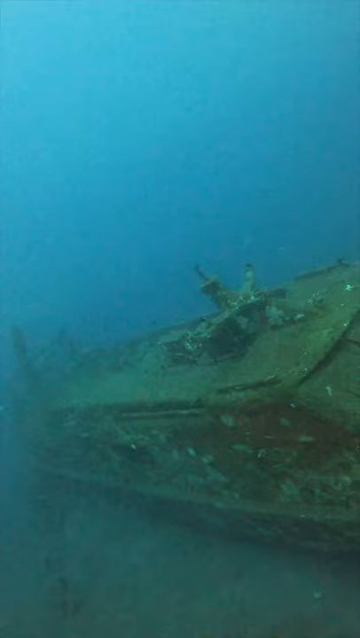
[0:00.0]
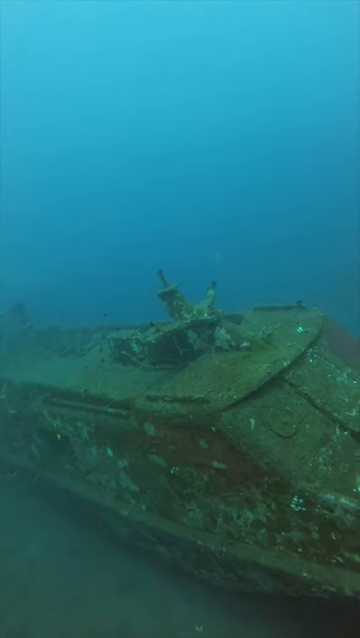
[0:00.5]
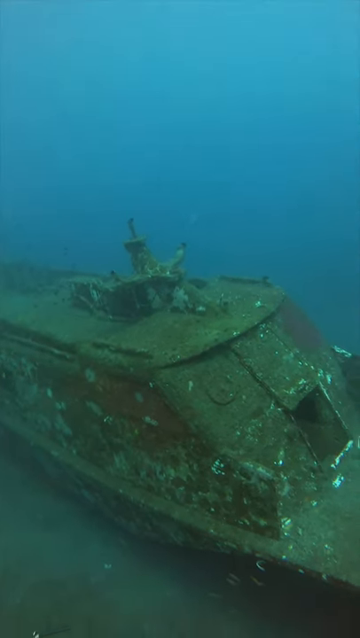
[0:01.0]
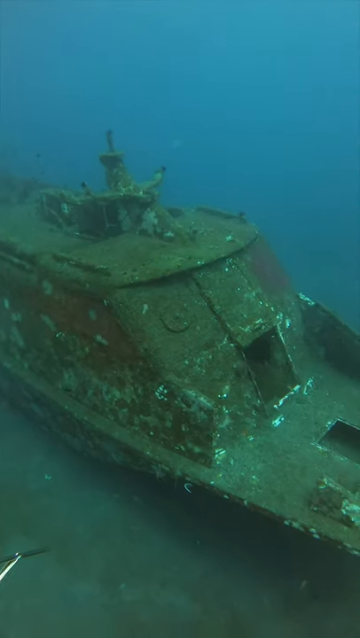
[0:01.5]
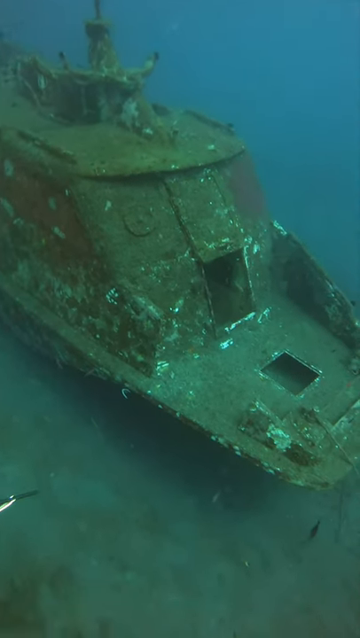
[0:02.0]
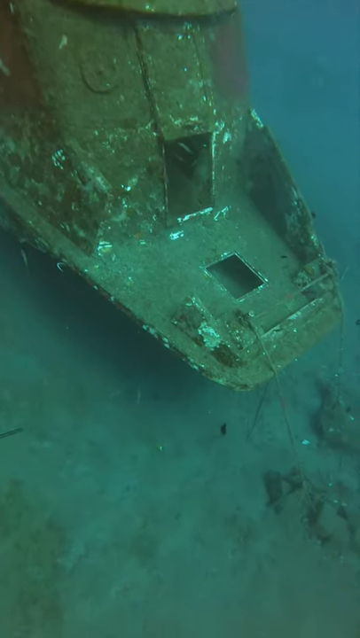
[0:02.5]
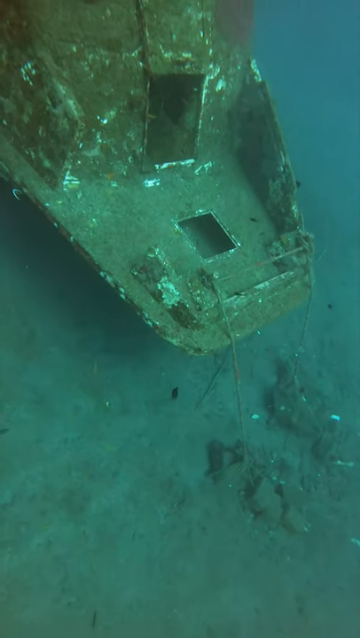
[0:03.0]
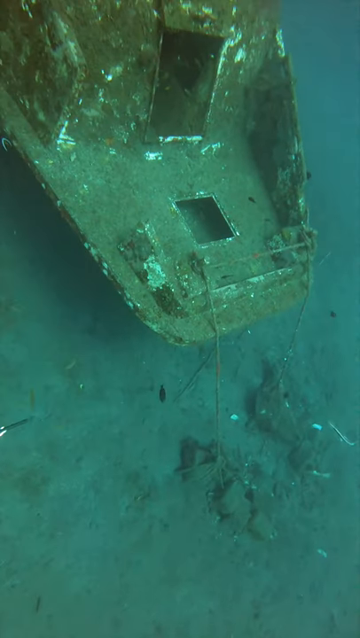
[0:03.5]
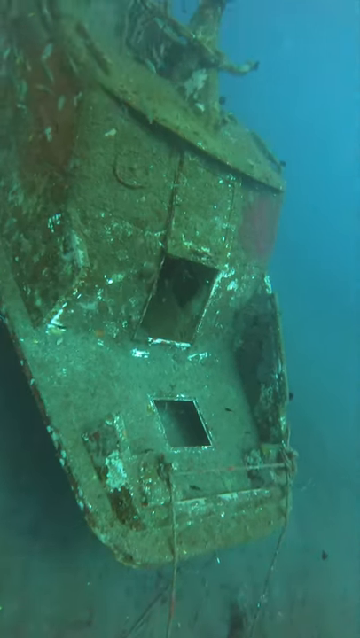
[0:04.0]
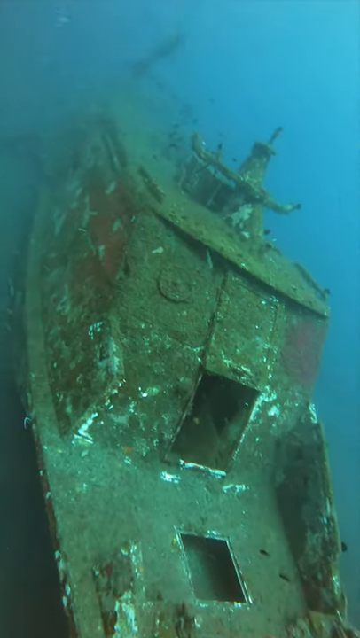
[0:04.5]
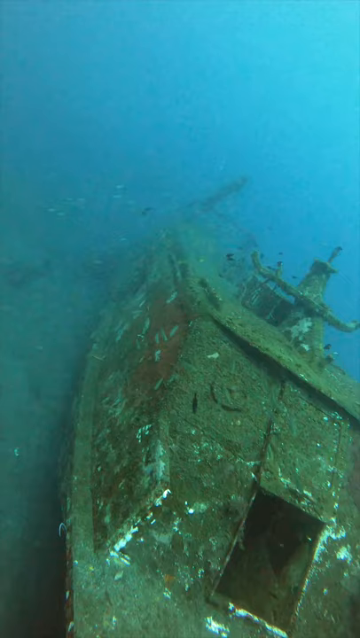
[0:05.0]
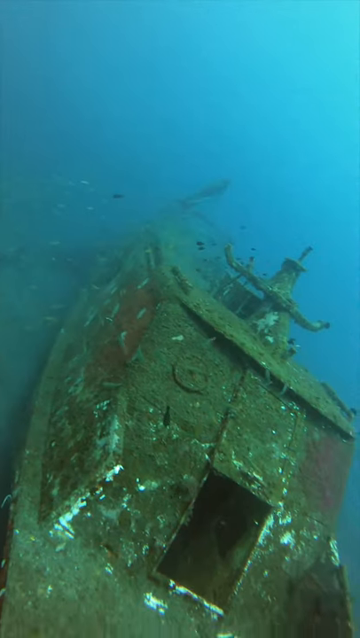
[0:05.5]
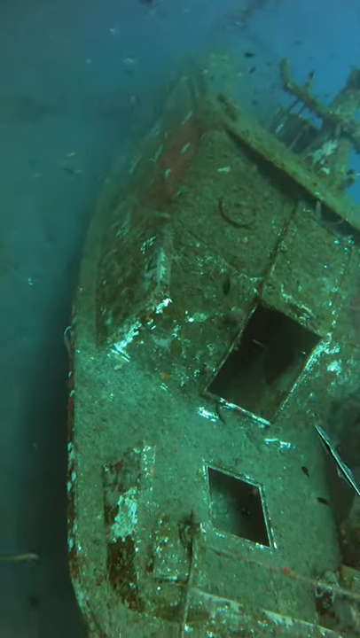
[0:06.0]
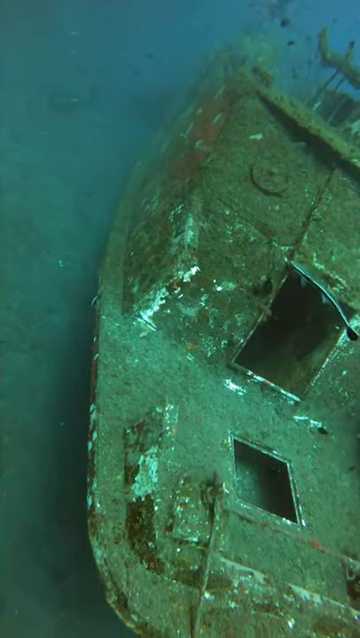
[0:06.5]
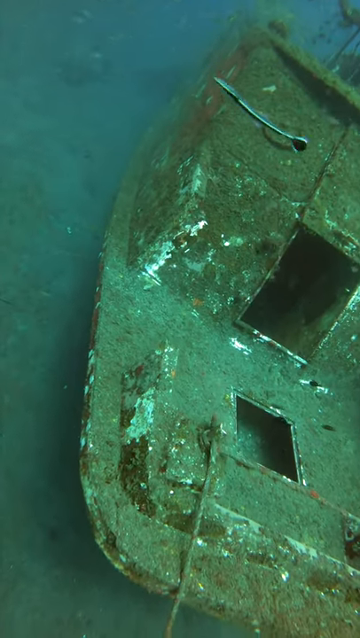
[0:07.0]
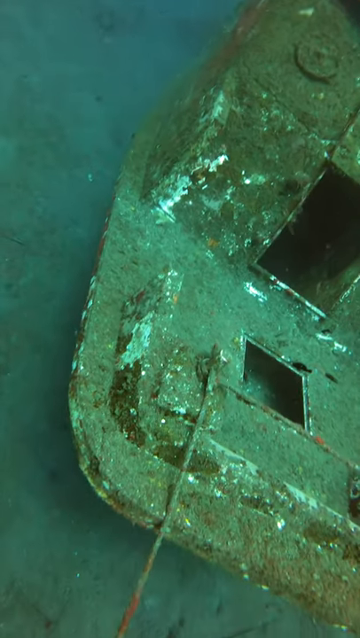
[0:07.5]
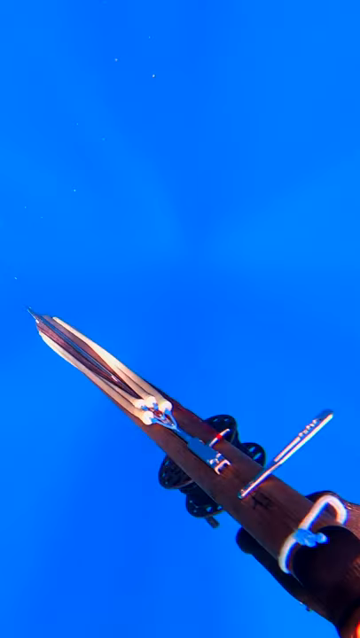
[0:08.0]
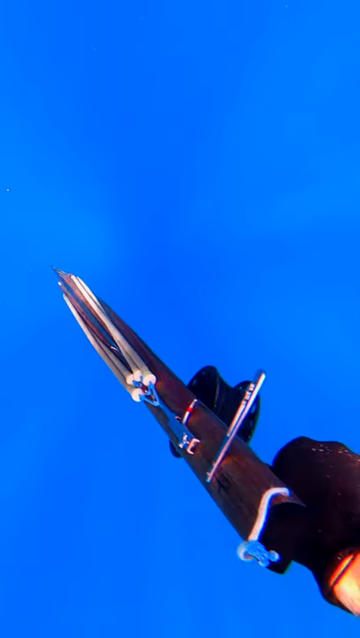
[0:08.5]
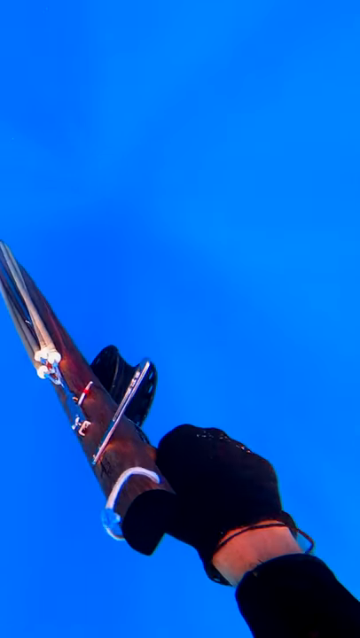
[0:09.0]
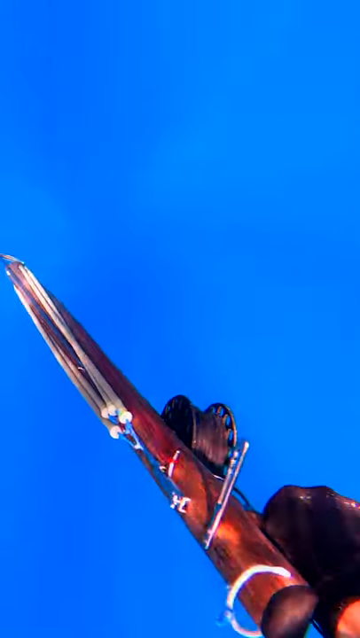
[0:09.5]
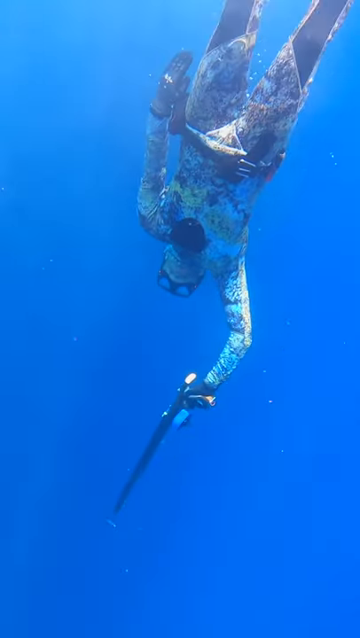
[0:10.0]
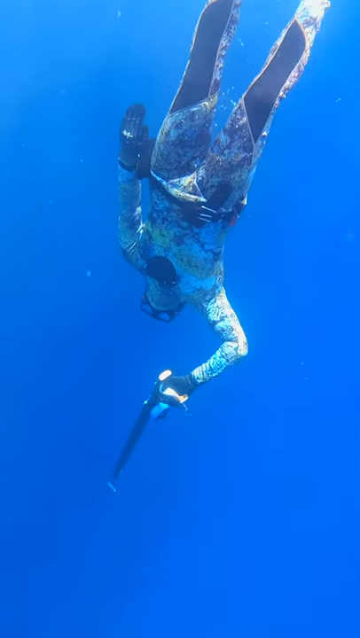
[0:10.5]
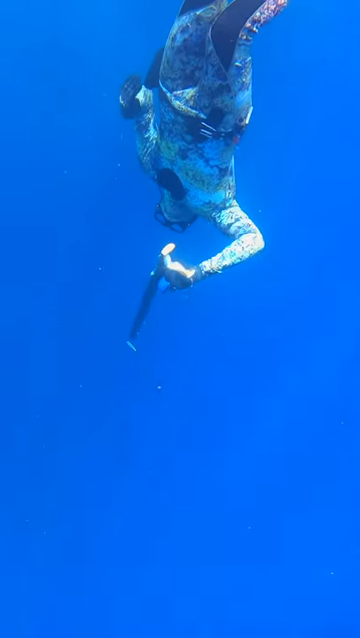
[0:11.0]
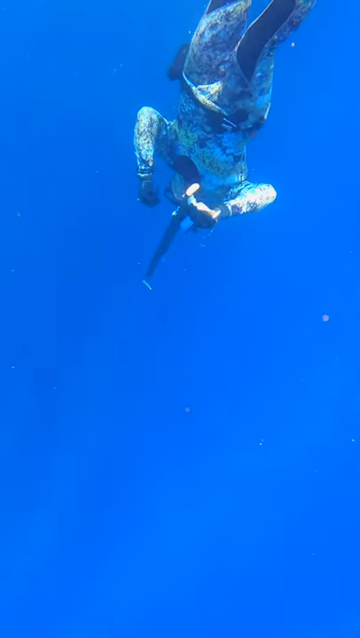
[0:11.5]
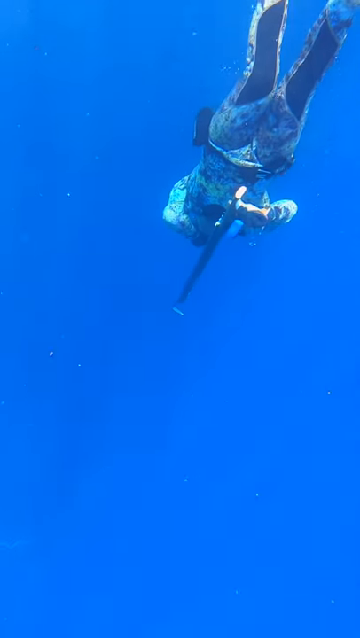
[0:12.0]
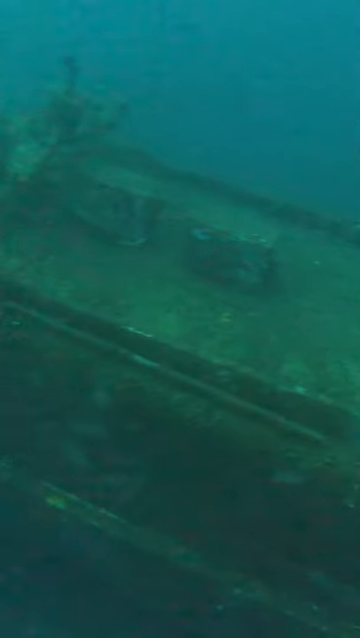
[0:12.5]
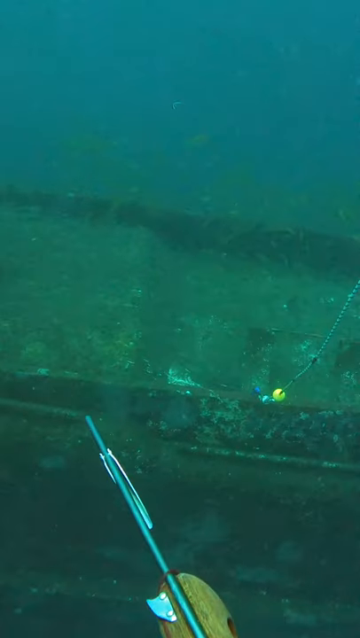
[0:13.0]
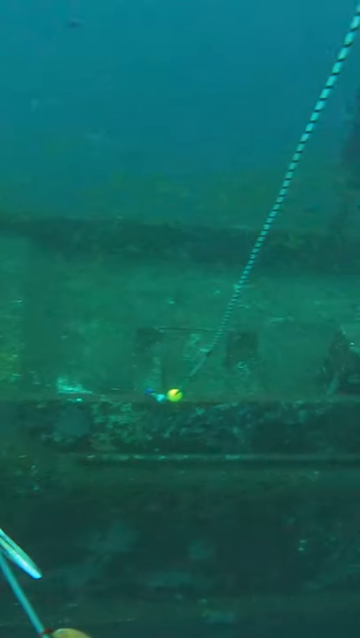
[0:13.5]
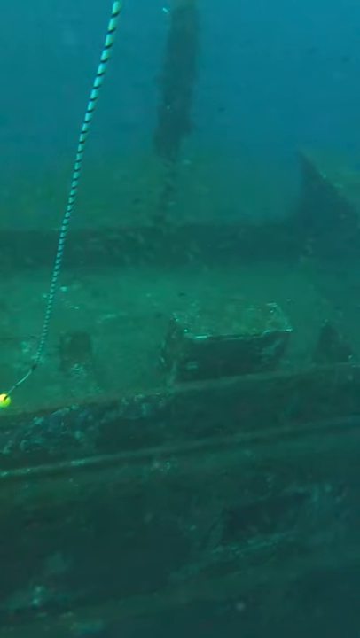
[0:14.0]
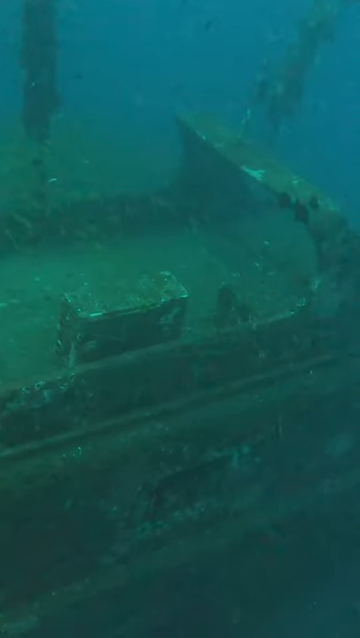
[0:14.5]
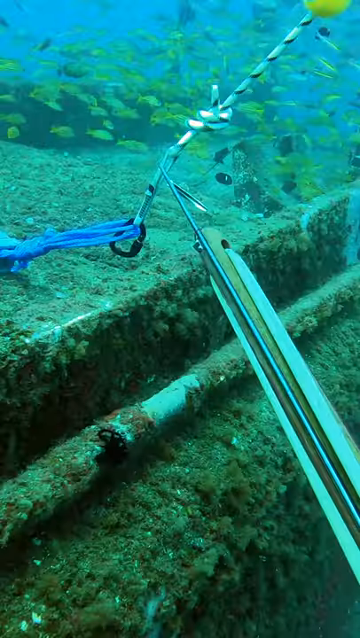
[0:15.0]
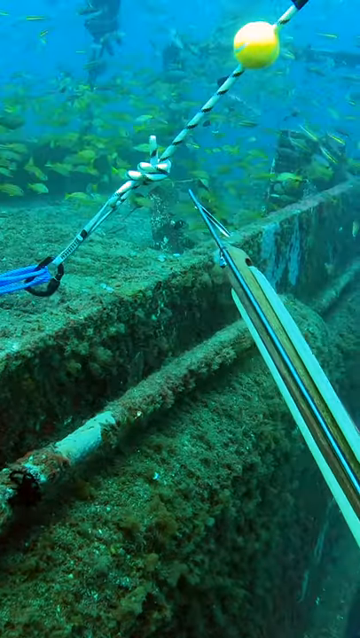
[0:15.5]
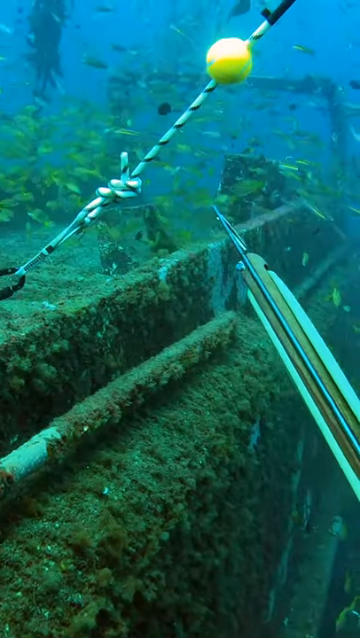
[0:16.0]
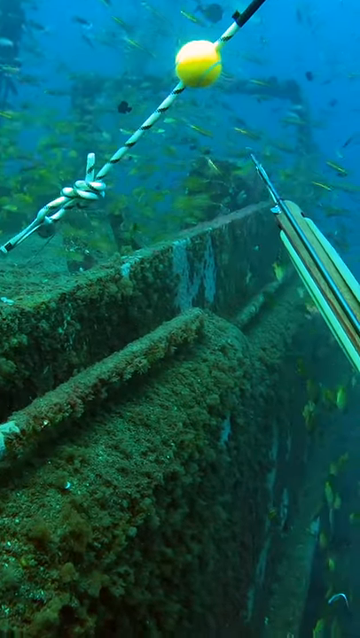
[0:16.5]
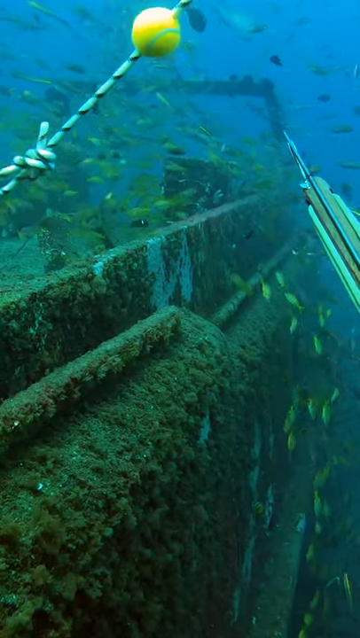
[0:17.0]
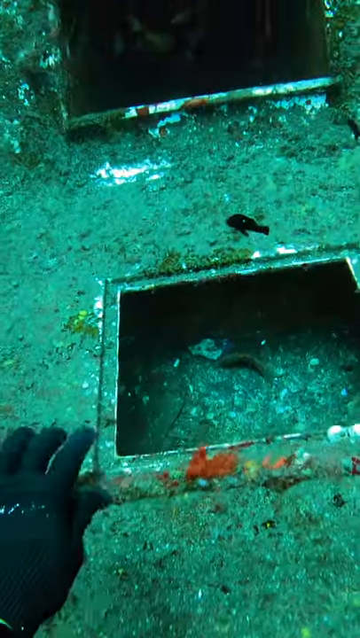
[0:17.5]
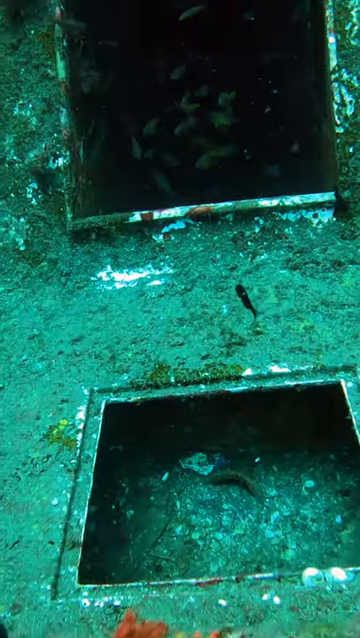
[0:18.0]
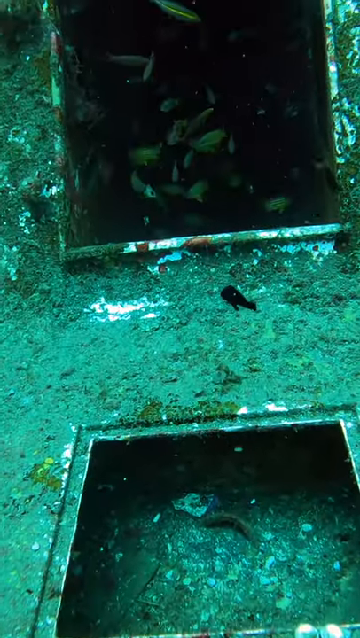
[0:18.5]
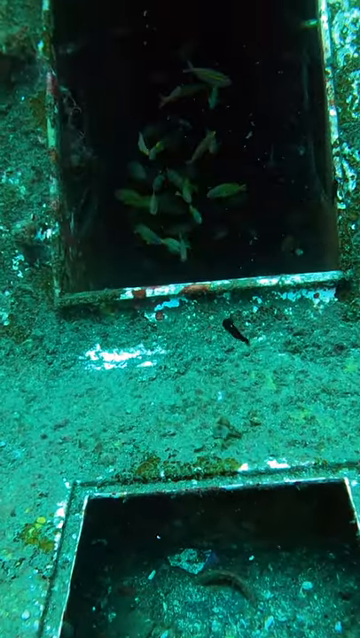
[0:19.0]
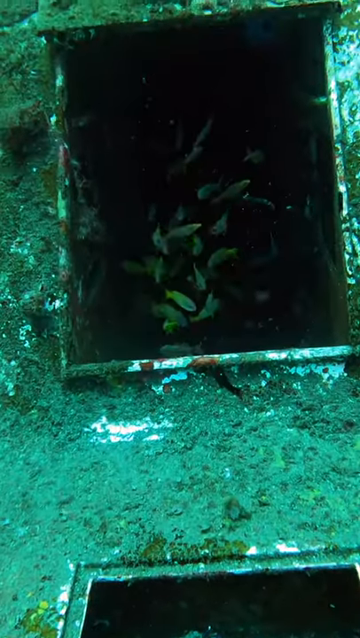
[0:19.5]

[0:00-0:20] A sunken old boat rests at the bottom of the ocean, and a diver holding a spear gun swims down toward it. He starts to descend from the surface of the water, swimming downward toward the boat. He wears a camouflage-type wetsuit and snorkel gear. The boat looks to be a medium-sized vessel, though it is hard to tell what it is because it is very rusted and damaged; it has clearly been there a long time. It is covered with algae and other things, and a lot of fish swim both around and through it. Some shots are from a first-person perspective, almost as if from the diver, showing the tip of his spear gun and what he is looking at, while other shots, possibly from a second video, show a full view of the diver and the boat. The setting is the bottom of the ocean.